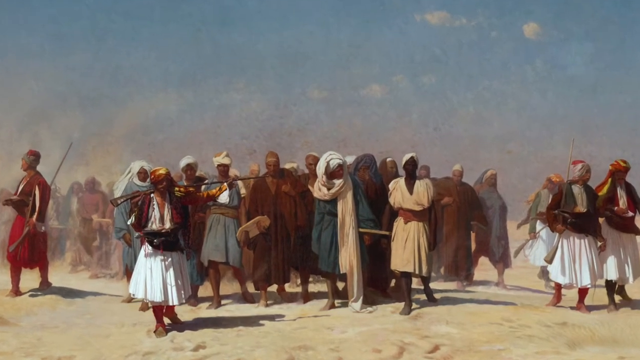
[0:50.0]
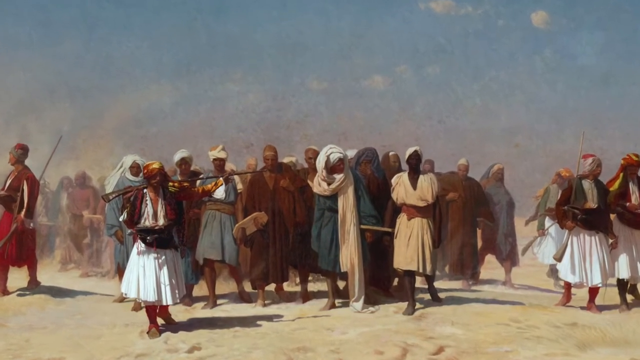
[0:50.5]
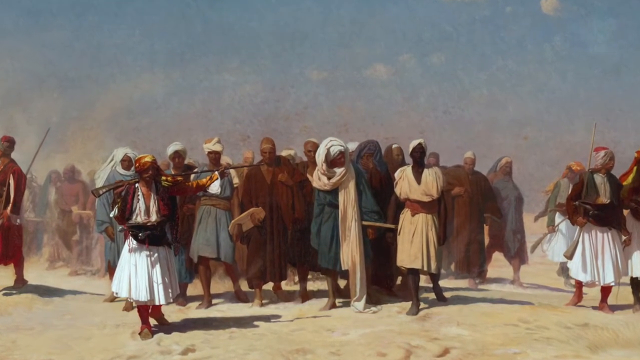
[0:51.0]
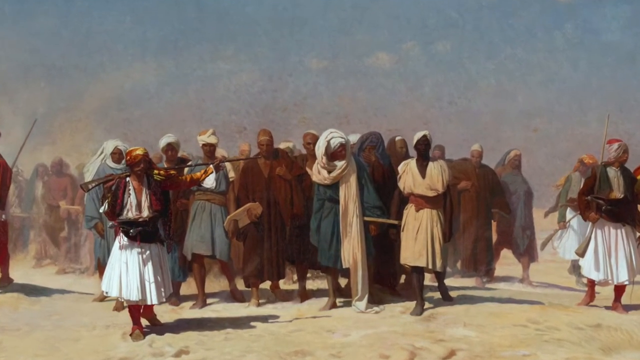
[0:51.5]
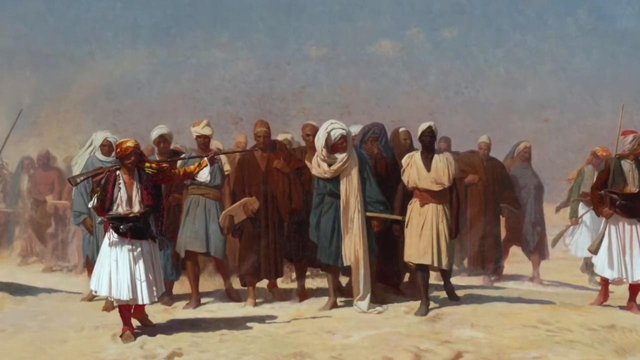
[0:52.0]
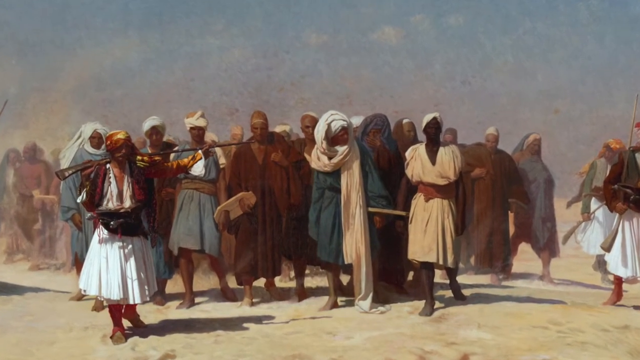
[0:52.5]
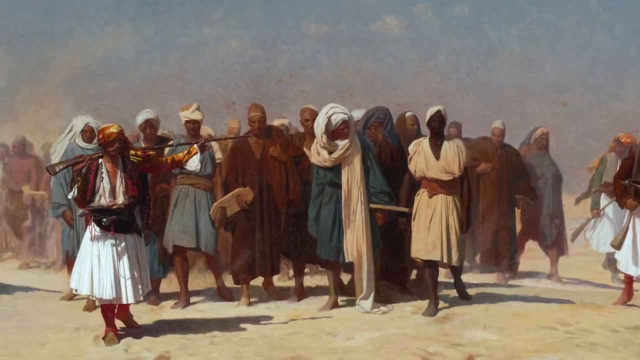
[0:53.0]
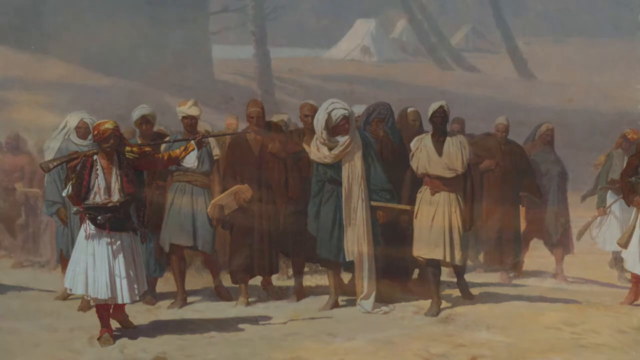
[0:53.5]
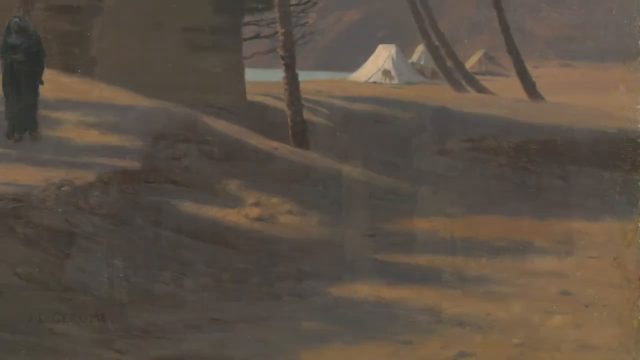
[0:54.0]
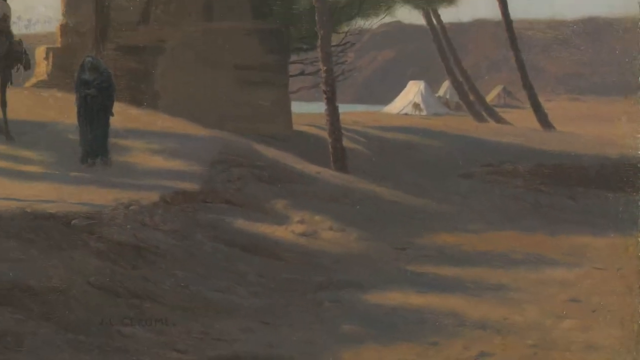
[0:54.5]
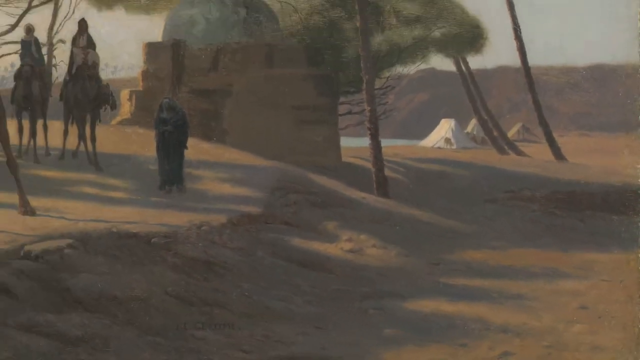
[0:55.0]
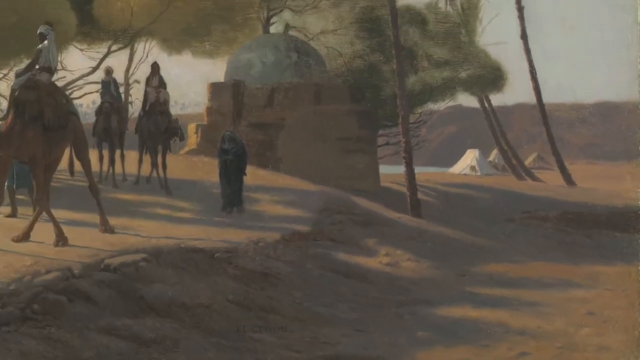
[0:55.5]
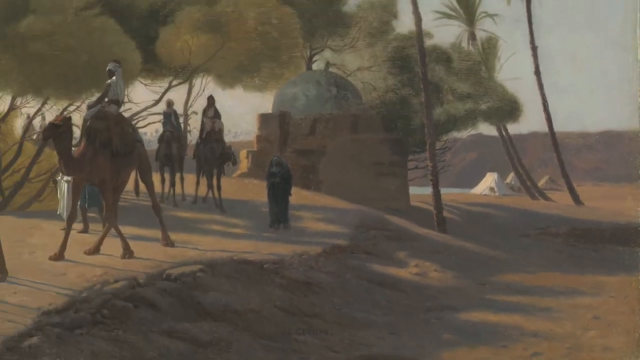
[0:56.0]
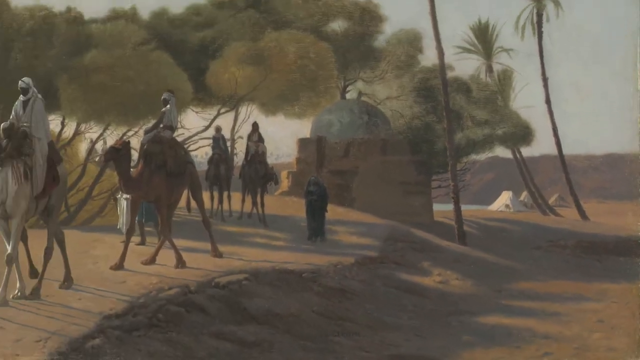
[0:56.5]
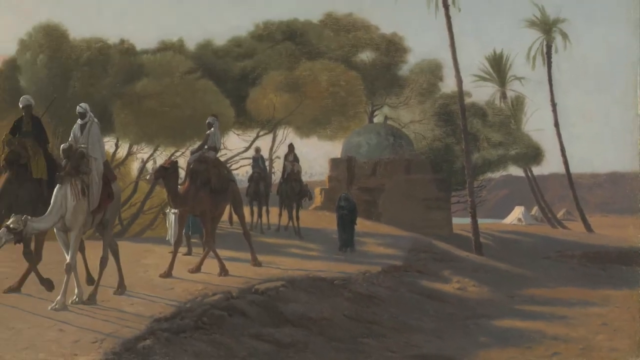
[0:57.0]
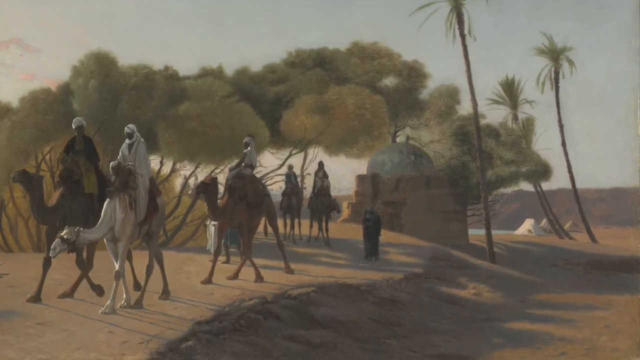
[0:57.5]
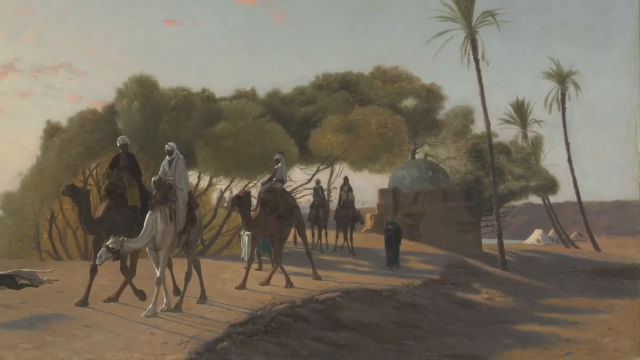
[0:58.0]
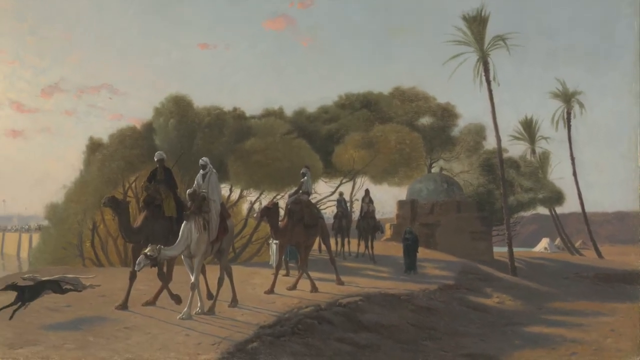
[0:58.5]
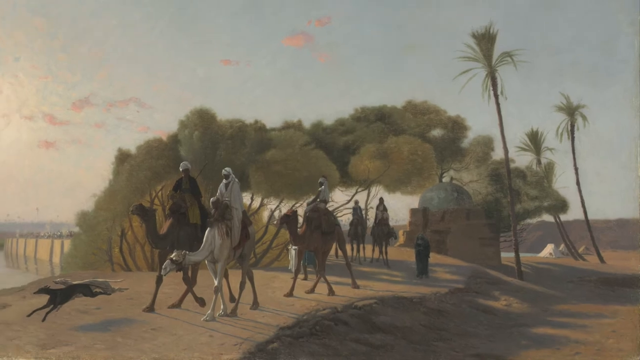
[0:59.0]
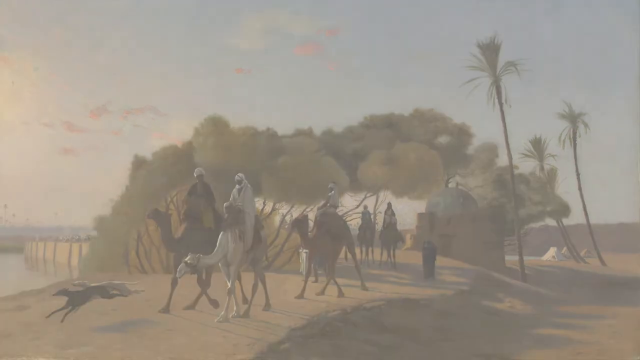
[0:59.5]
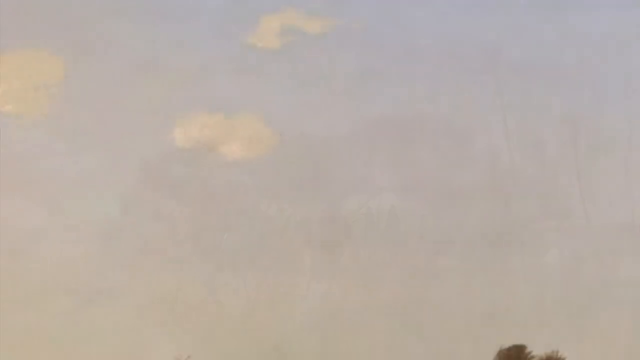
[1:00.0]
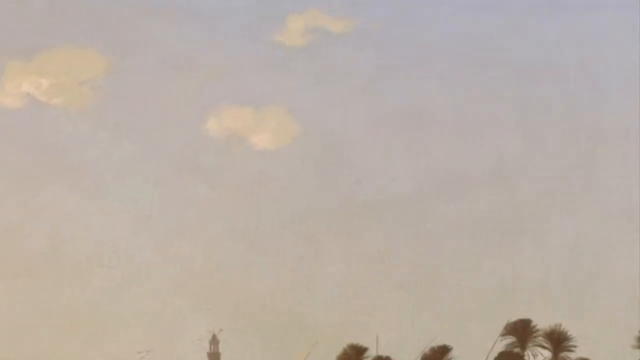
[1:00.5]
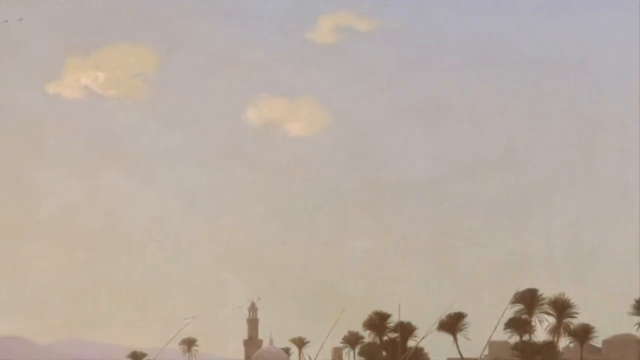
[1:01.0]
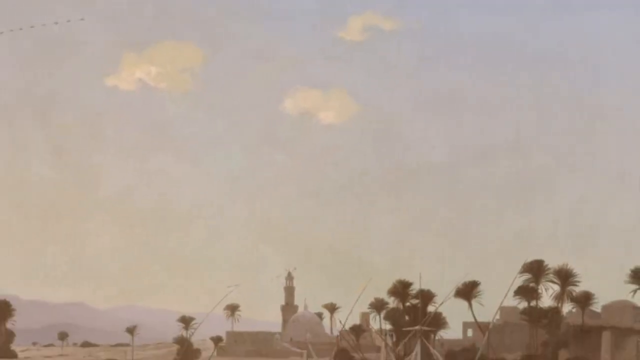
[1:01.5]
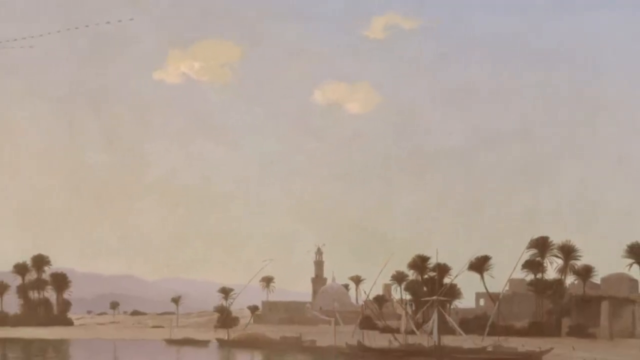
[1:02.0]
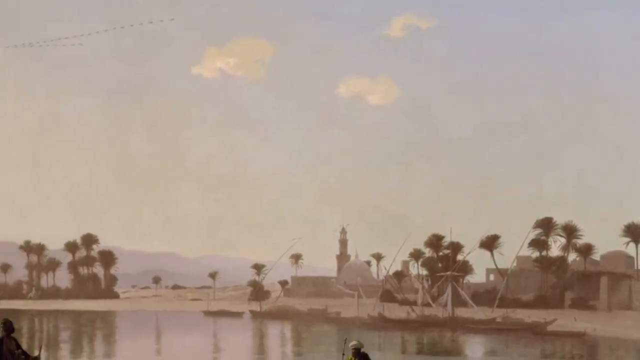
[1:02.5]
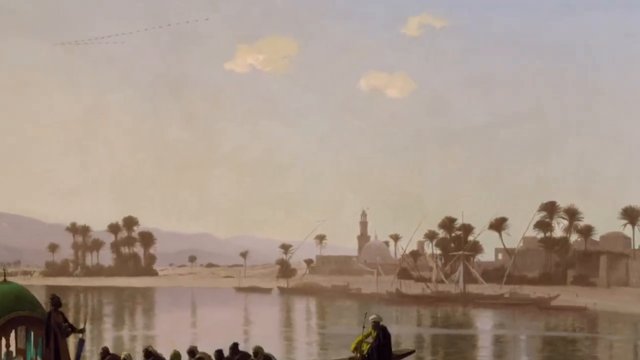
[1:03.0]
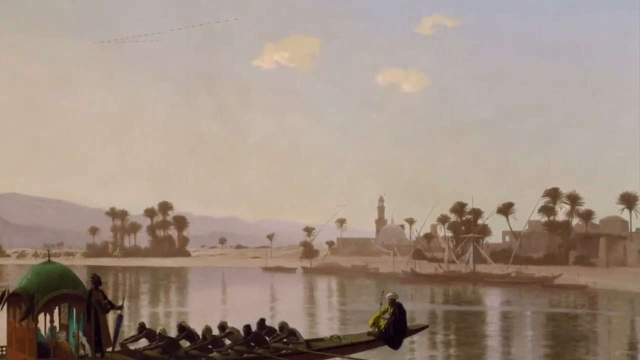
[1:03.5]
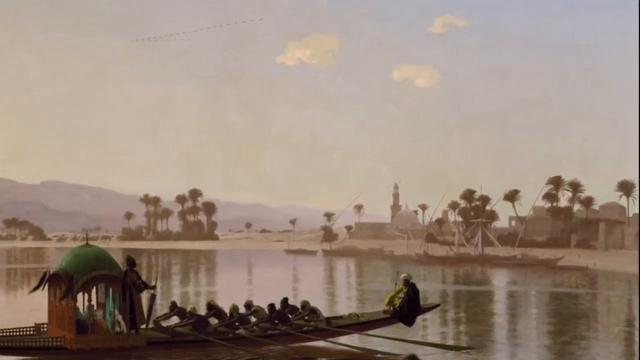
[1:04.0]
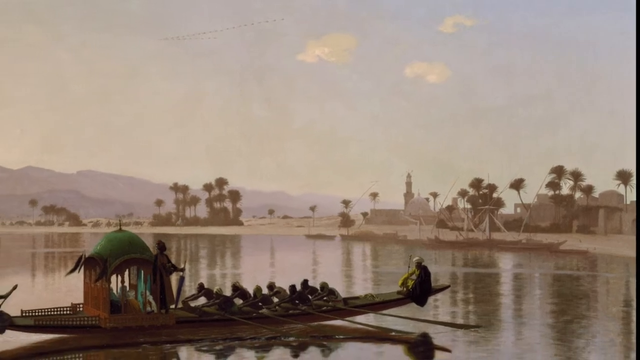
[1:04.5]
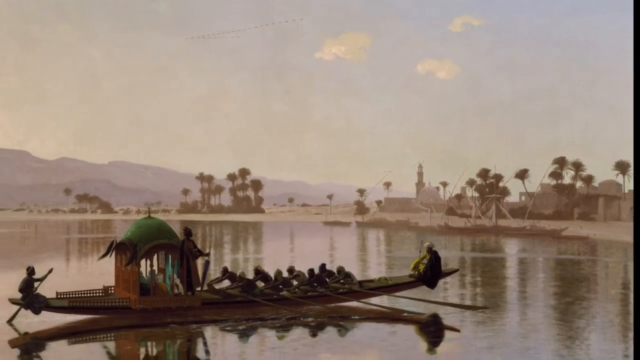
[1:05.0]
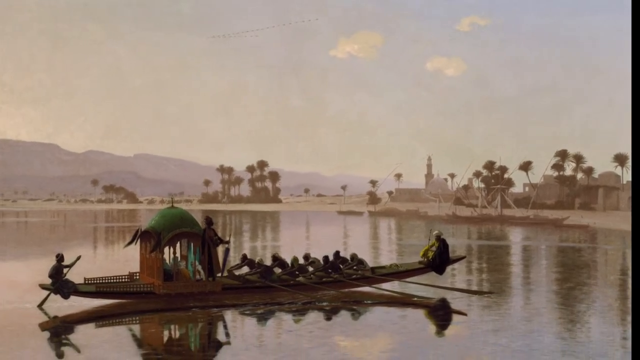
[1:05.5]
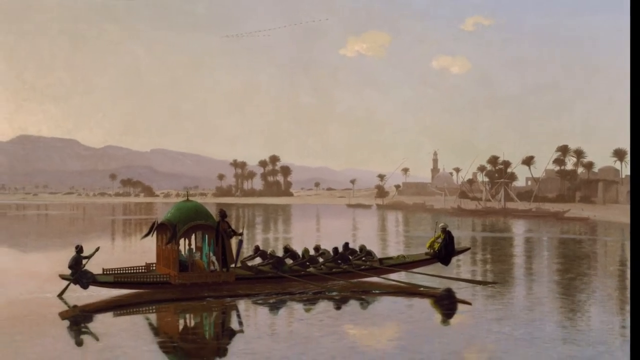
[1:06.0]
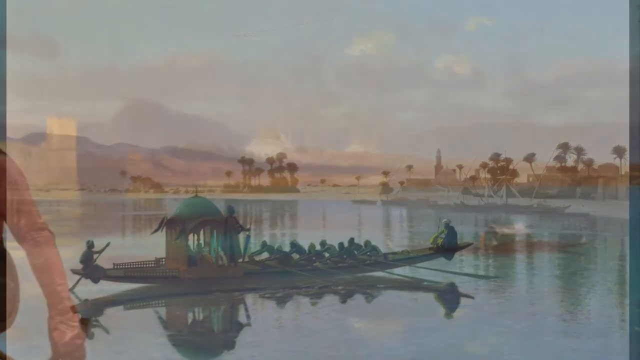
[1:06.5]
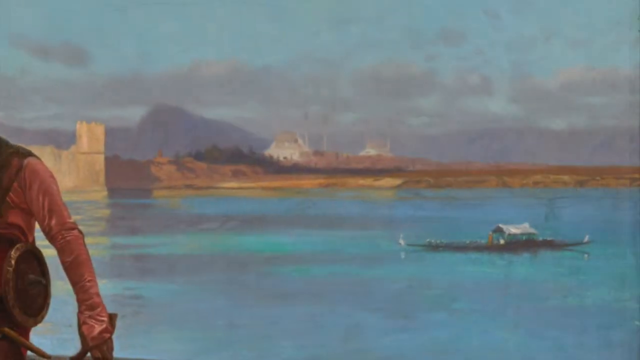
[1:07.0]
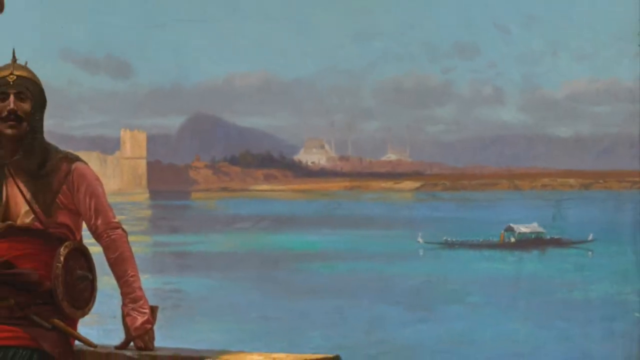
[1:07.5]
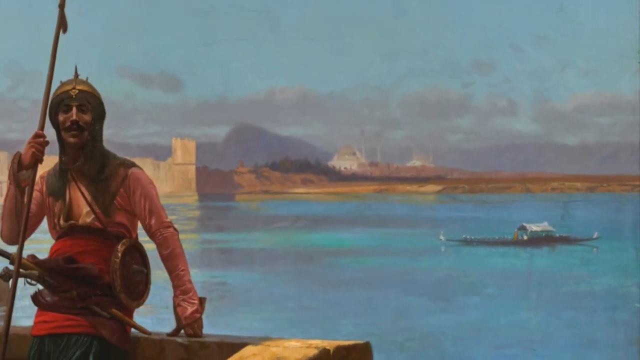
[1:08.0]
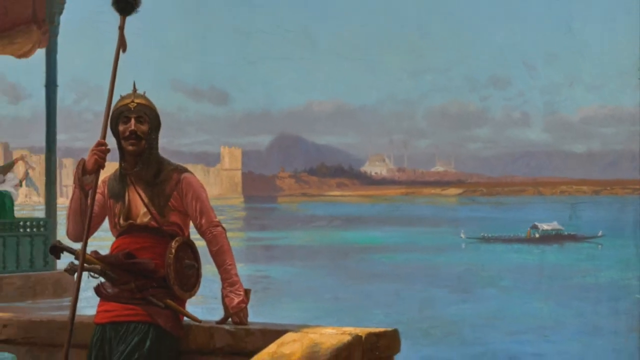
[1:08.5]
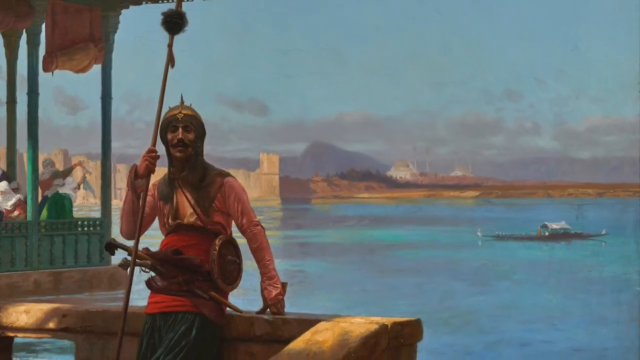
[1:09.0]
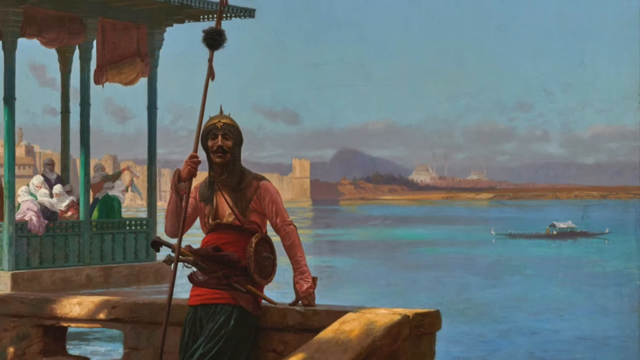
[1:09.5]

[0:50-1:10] The camera pans in on a group of individuals, with some other individuals on the outside, though the main focus seems to be on this group of maybe about 13 people. Their clothing is different; some is similar, but it looks like the colors differ. The scene moves to what looks like camels and their riders, with about three camels and riders briefly made out. It fades out and pans into another scene of people on a boat, which looks like a craft, a long boat with a little tent on it. The boat is shown on the water as the camera pans back out, showing an individual holding a long spear. The setting seems to be Egypt, with long palm trees, oasis-type areas, a wide open sky, and what seems to be a lot of sand.